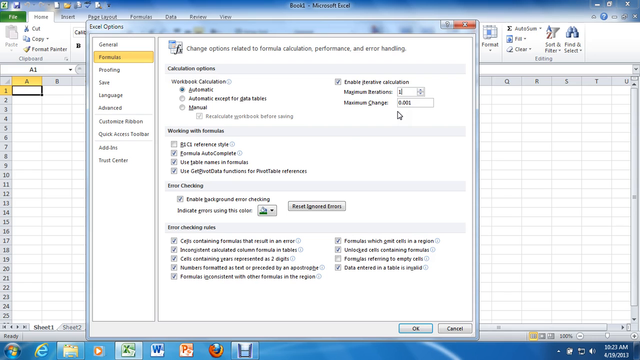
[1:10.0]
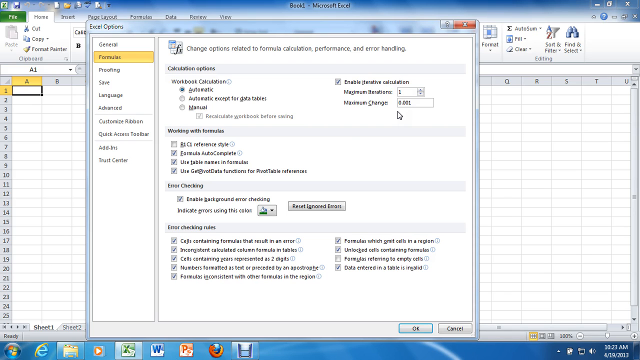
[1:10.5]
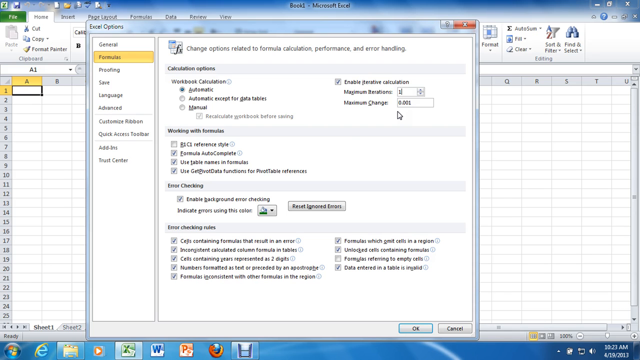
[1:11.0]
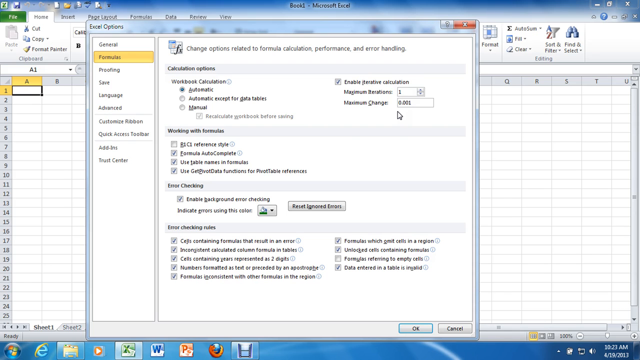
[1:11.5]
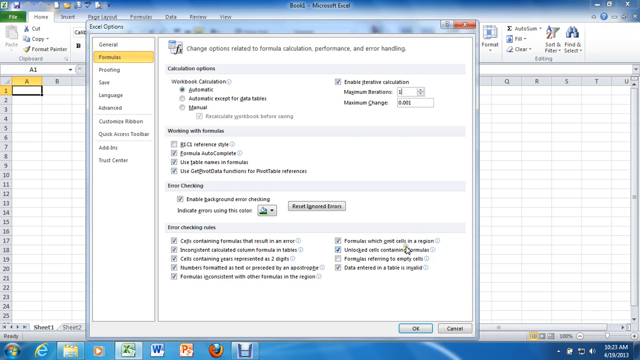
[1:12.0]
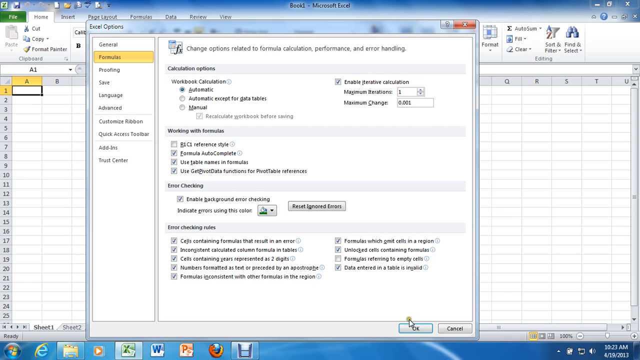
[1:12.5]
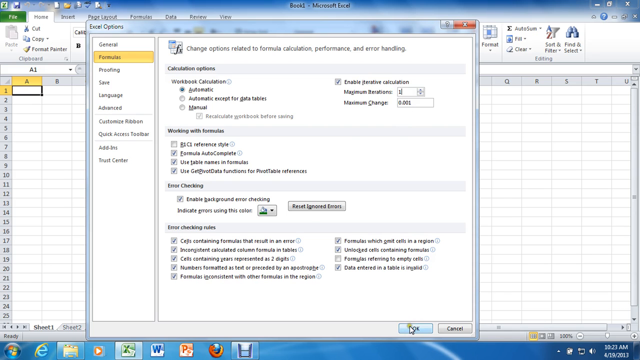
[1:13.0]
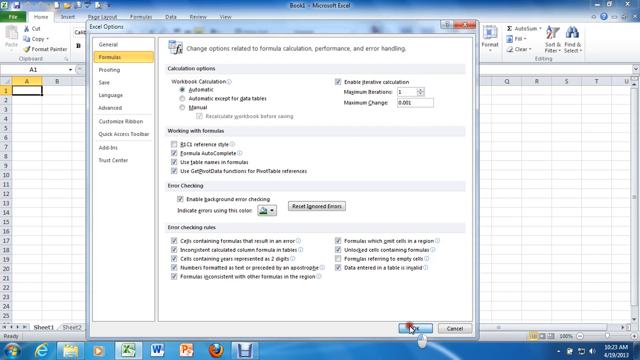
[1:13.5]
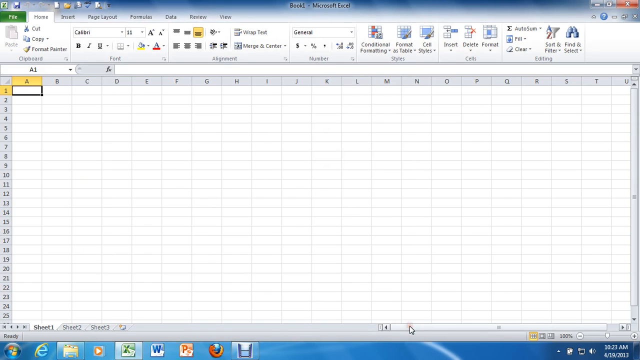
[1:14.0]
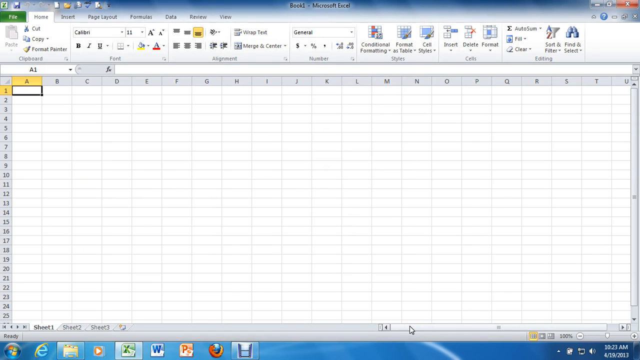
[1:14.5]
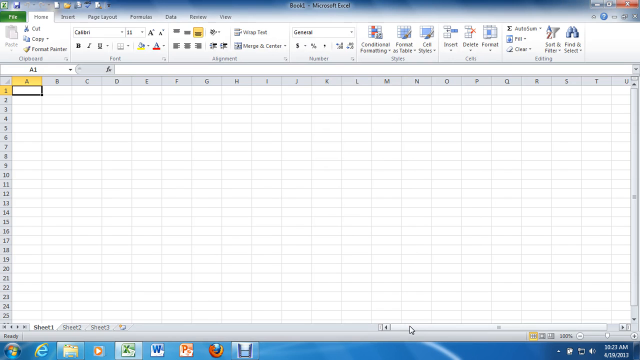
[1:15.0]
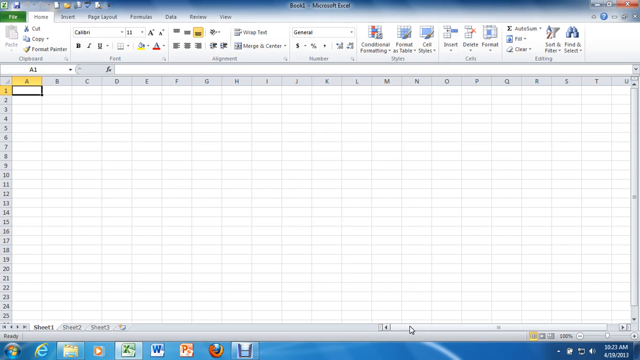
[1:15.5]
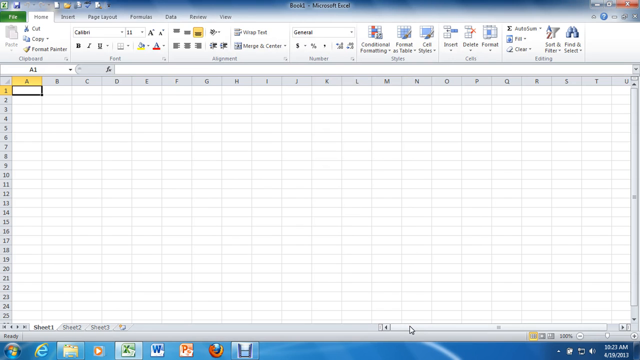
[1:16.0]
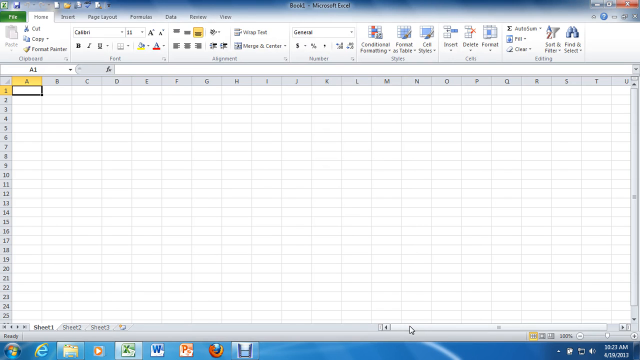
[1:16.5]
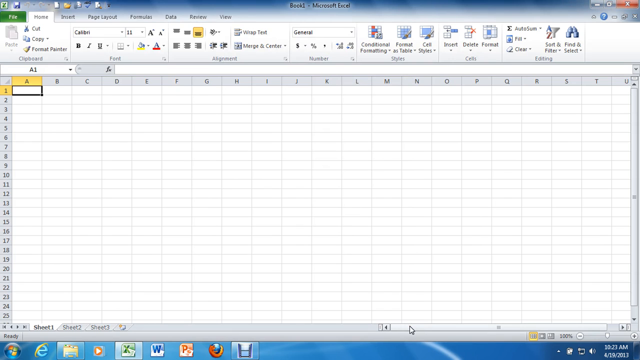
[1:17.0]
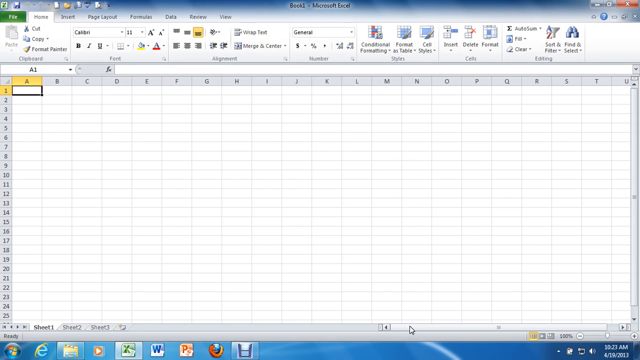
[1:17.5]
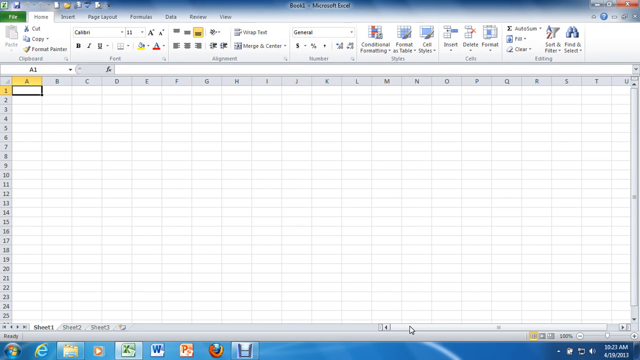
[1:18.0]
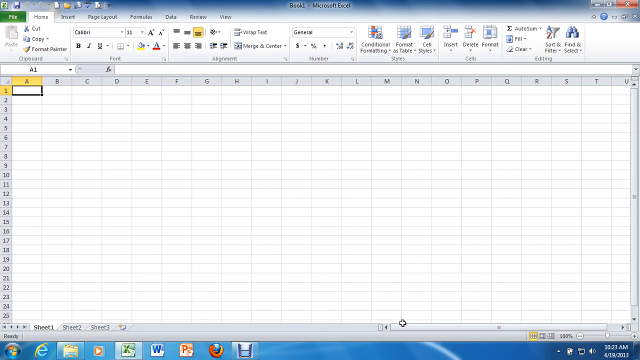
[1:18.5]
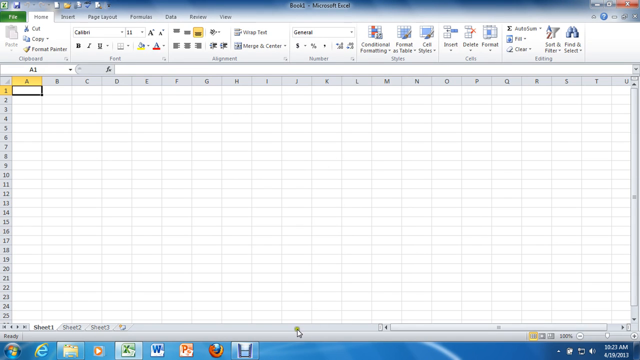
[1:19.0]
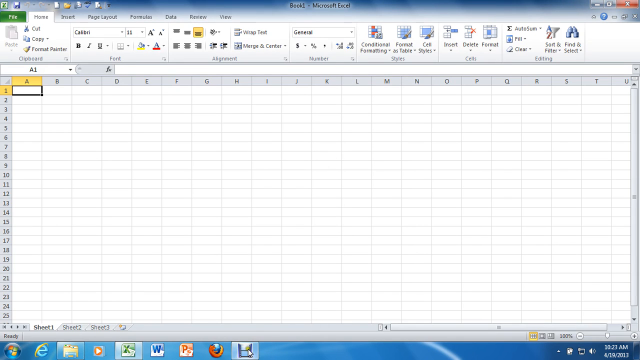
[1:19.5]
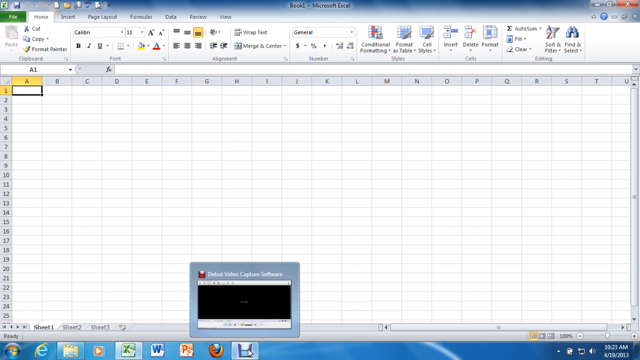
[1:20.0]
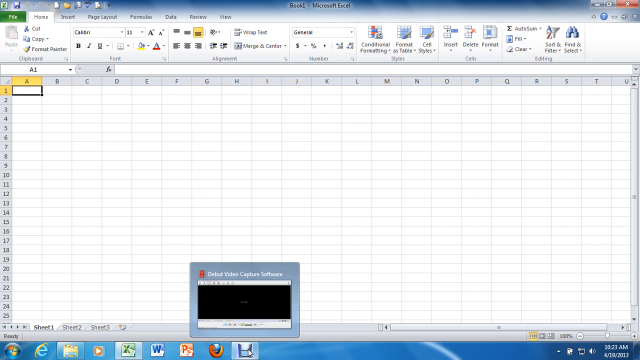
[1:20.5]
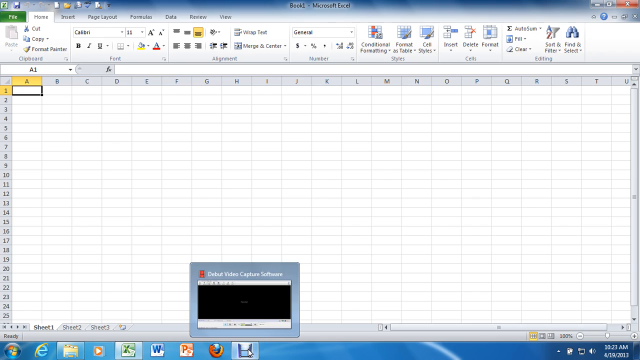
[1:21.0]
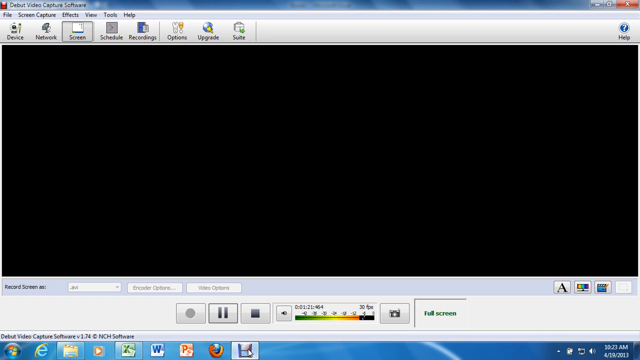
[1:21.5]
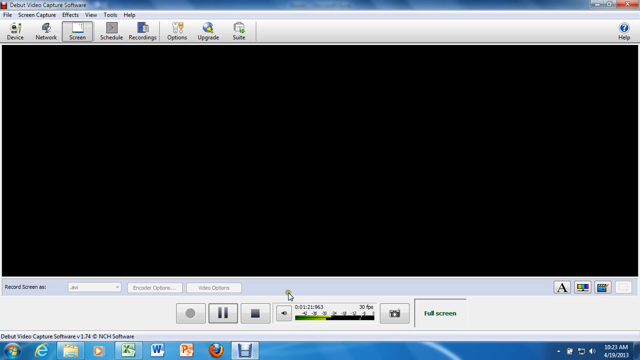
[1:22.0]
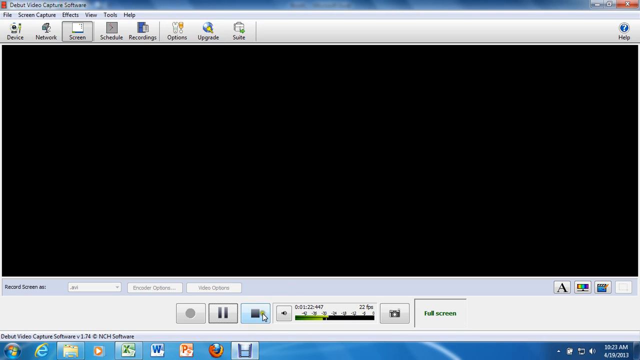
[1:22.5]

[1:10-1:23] The big empty file with lettered columns and cells sits still with nothing in it and nothing being done. The mouse pointer is toward the bottom left of the screen and does not move. Then it suddenly moves up and clicks File, opening the page with the formulas and the recent workbooks. He clicks Recent and opens another page, clicks through the options, opens another window, pulls up the Microsoft Excel page and enables calculation. He highlights a setting at 101 and one at .001. Everything is small, dark and very hard to read.